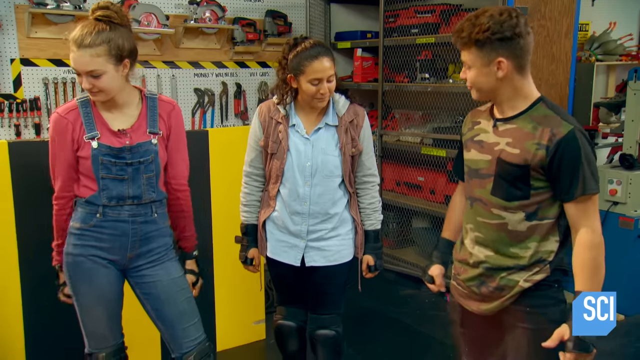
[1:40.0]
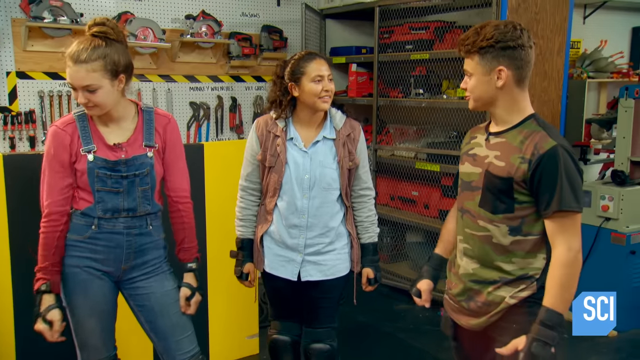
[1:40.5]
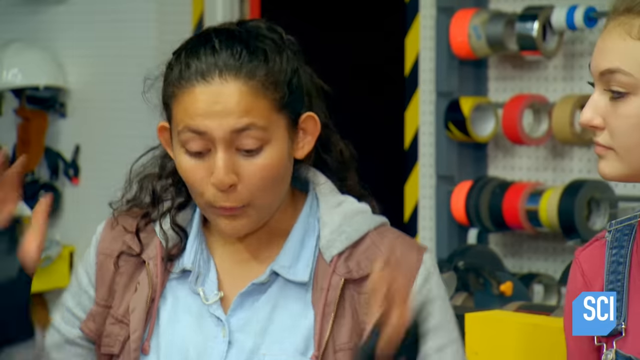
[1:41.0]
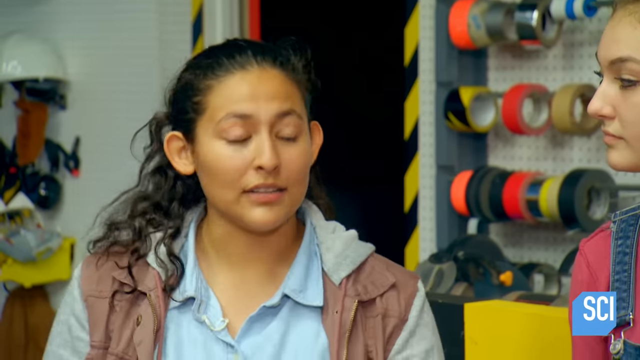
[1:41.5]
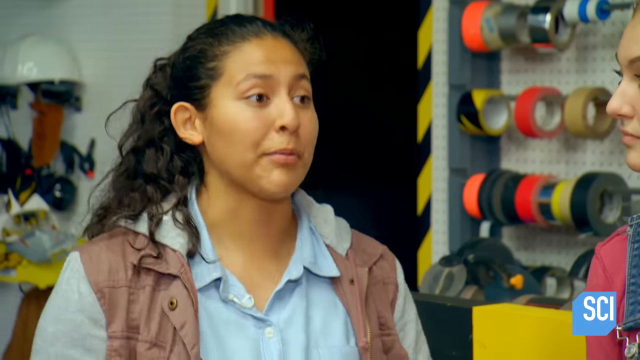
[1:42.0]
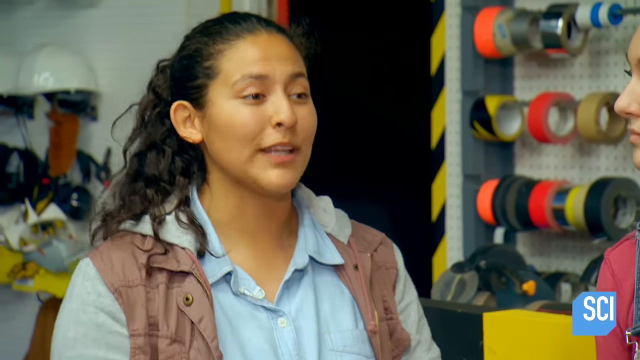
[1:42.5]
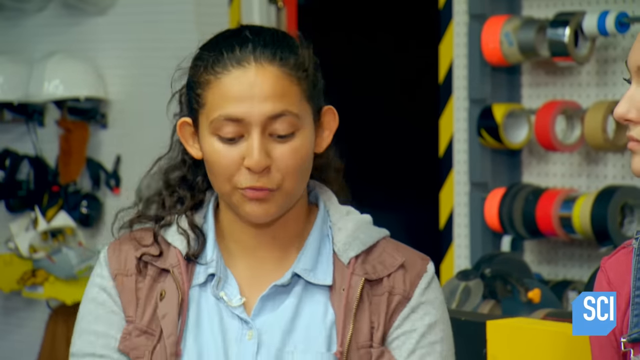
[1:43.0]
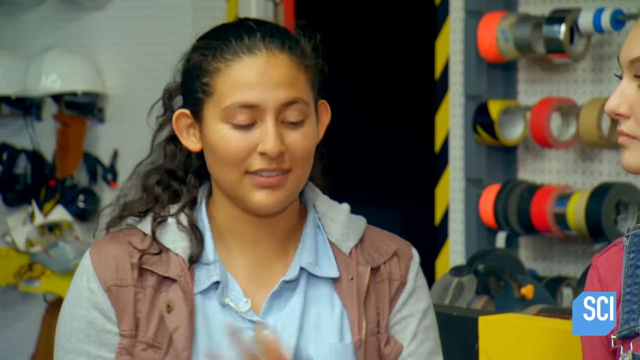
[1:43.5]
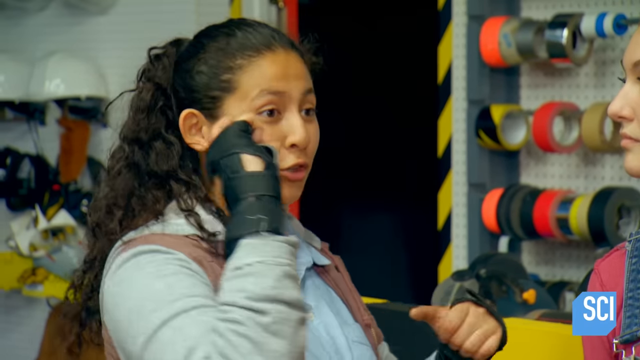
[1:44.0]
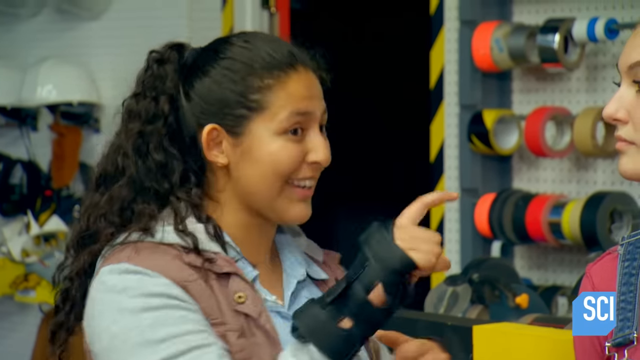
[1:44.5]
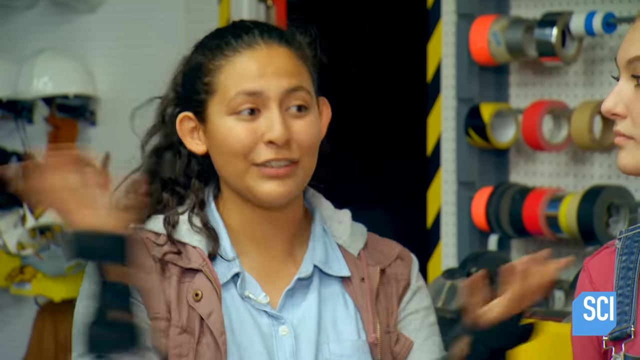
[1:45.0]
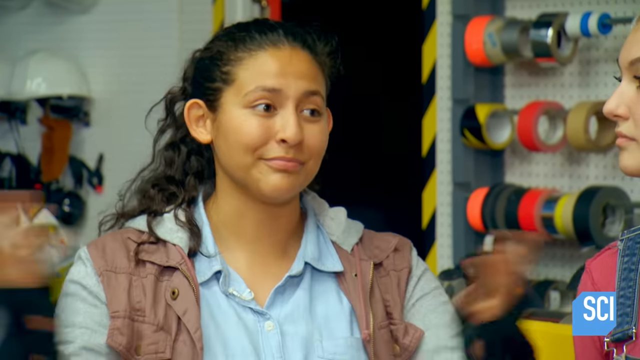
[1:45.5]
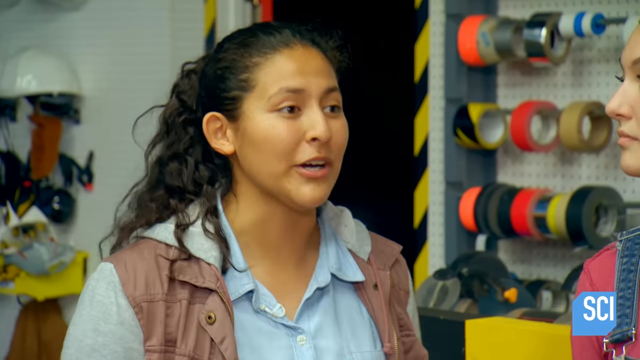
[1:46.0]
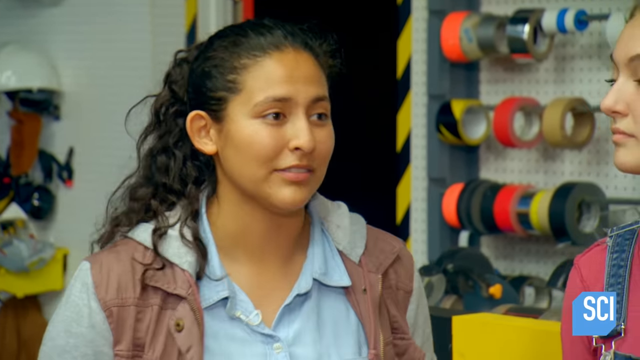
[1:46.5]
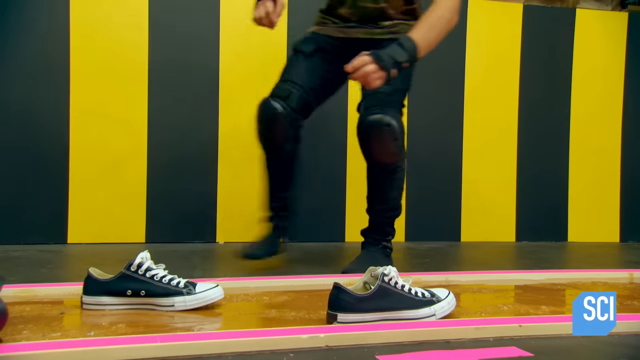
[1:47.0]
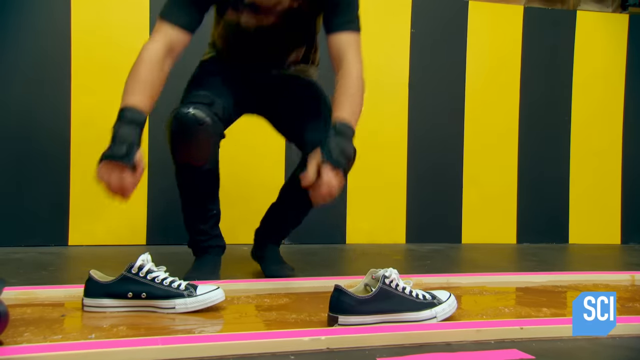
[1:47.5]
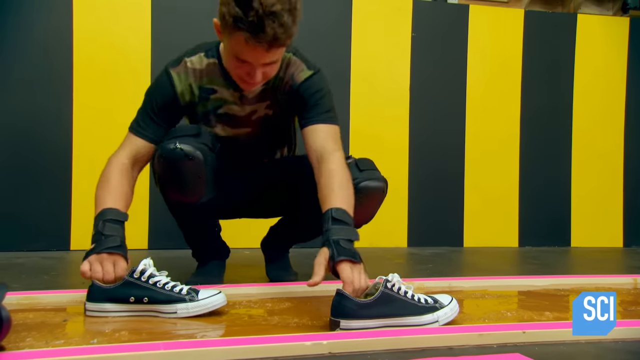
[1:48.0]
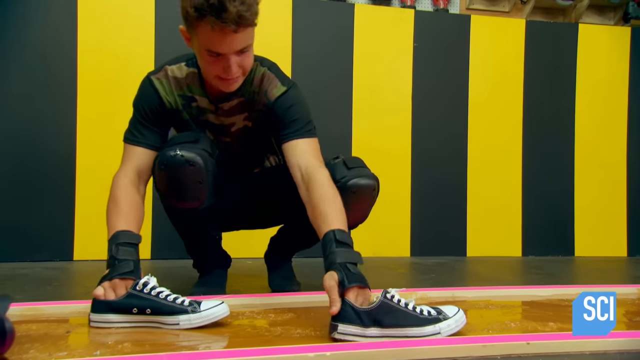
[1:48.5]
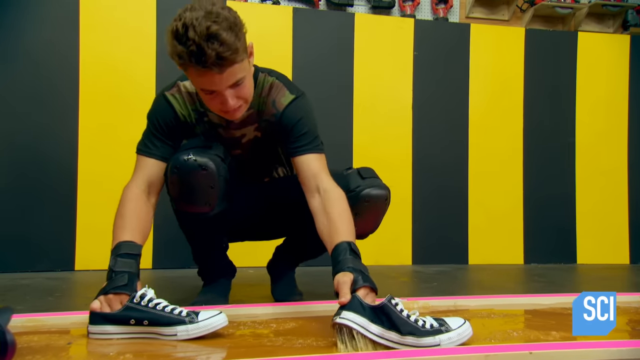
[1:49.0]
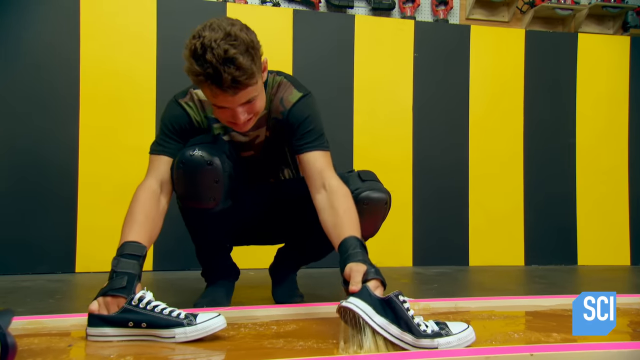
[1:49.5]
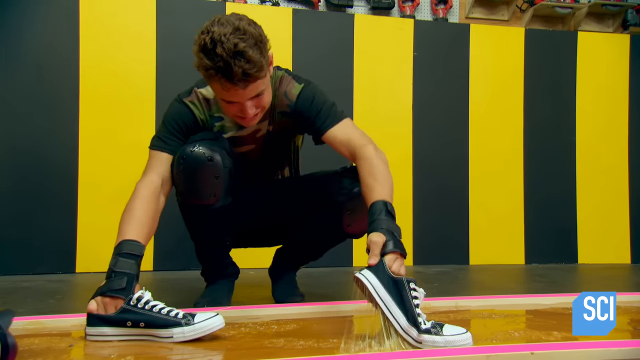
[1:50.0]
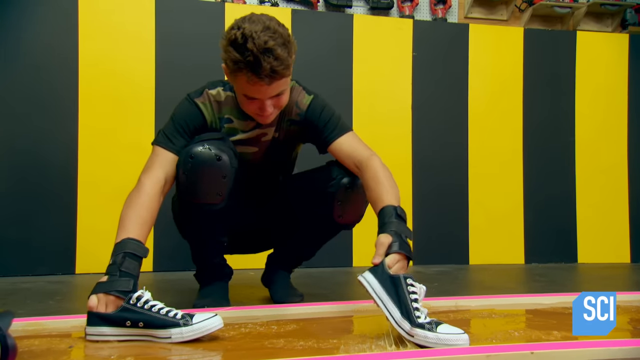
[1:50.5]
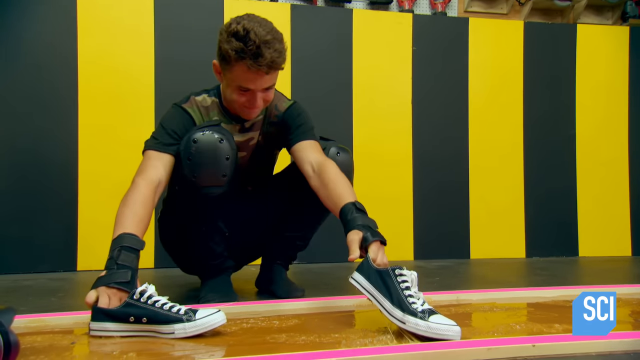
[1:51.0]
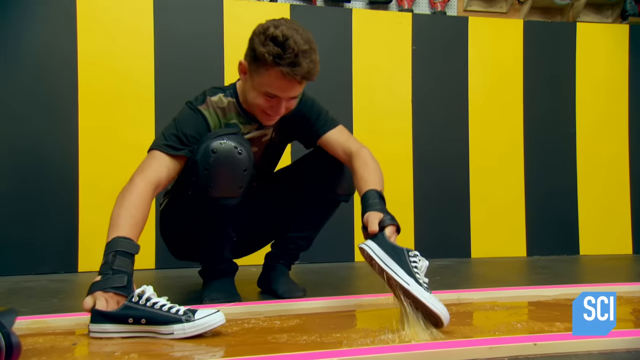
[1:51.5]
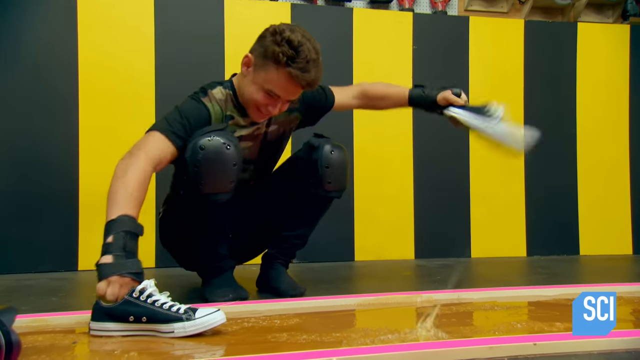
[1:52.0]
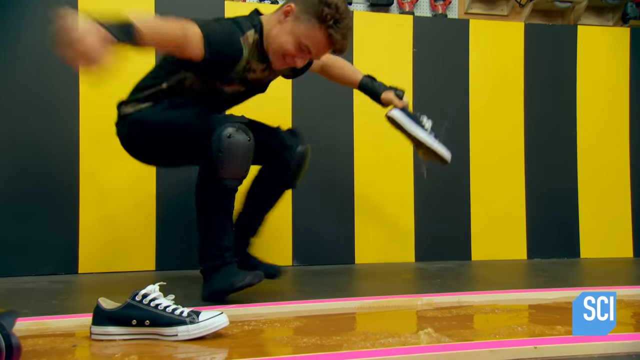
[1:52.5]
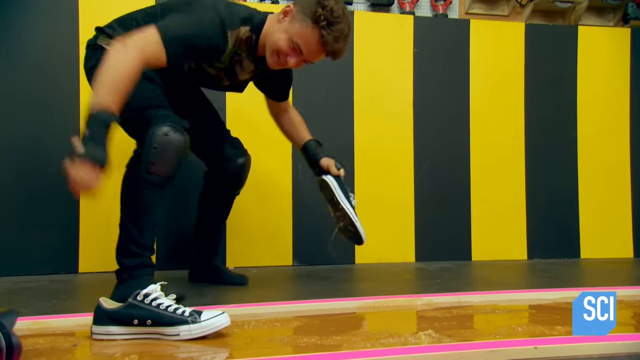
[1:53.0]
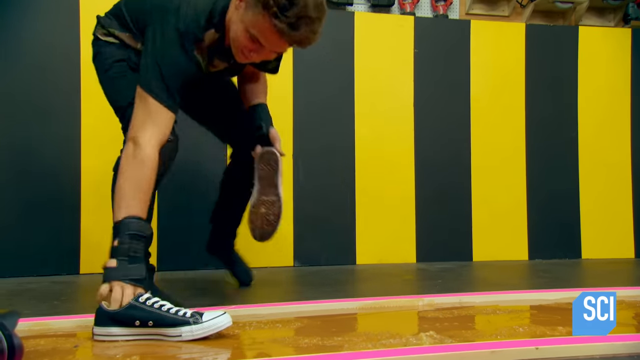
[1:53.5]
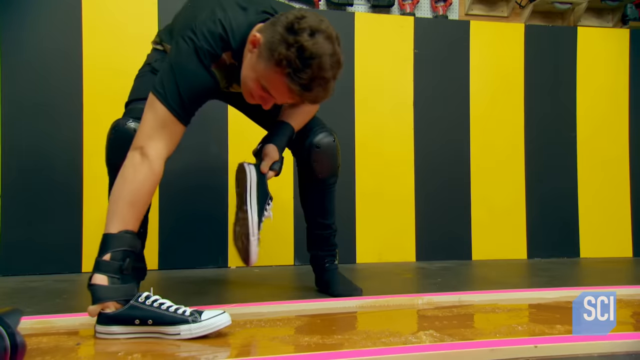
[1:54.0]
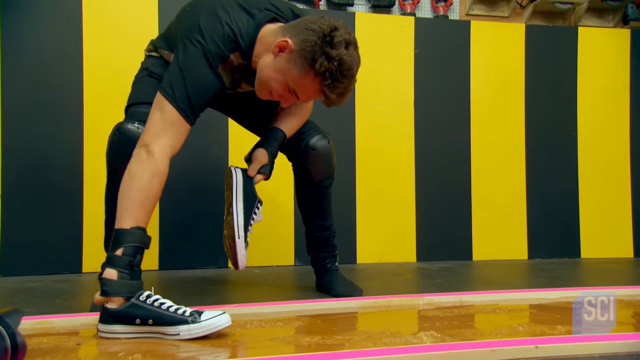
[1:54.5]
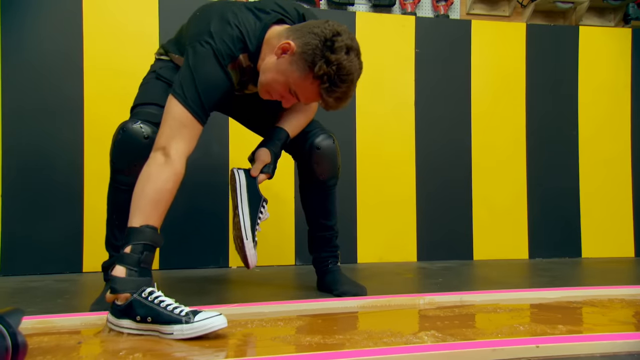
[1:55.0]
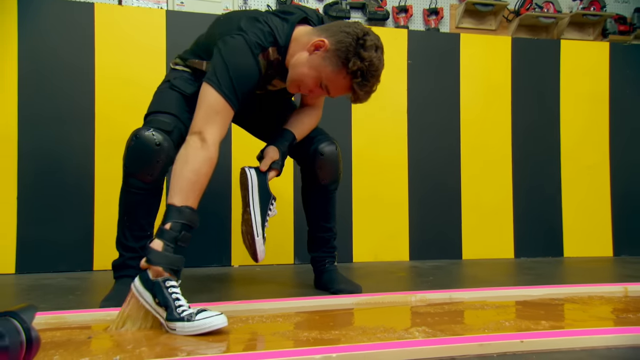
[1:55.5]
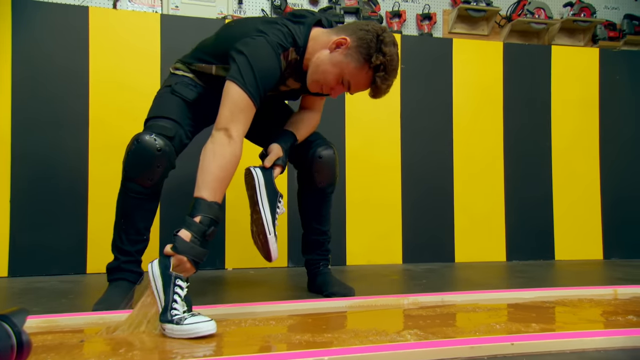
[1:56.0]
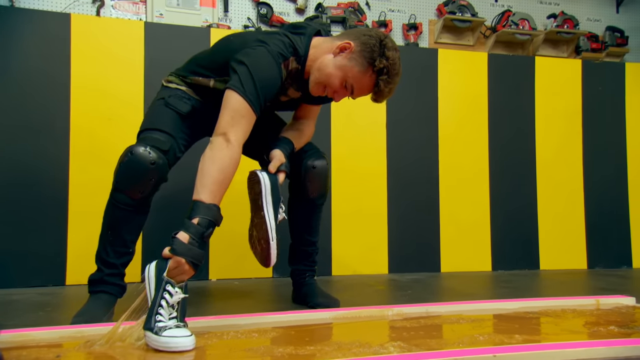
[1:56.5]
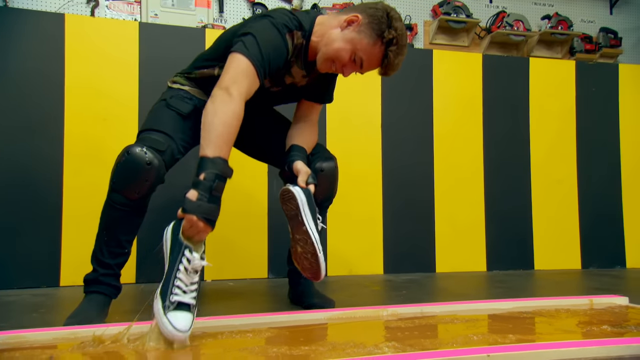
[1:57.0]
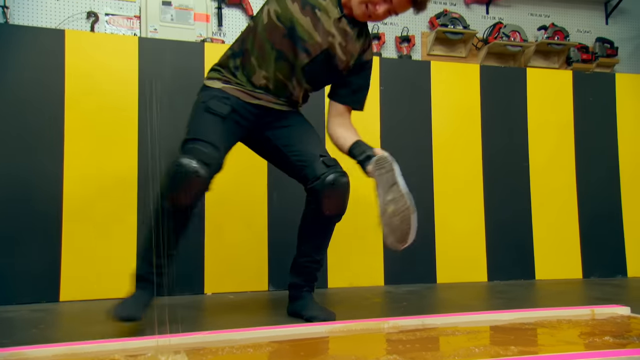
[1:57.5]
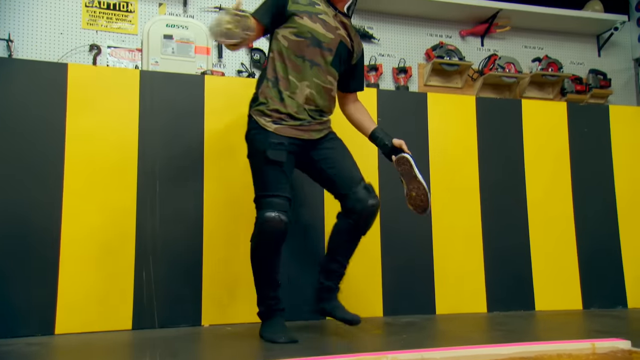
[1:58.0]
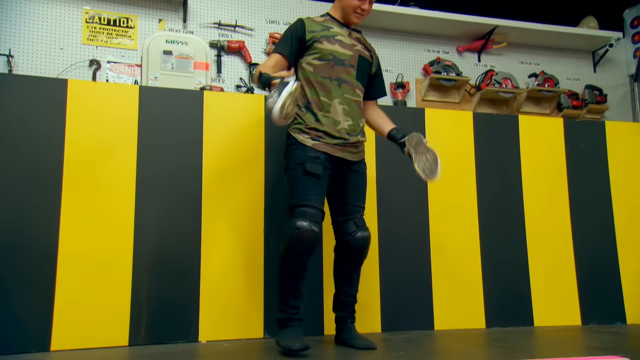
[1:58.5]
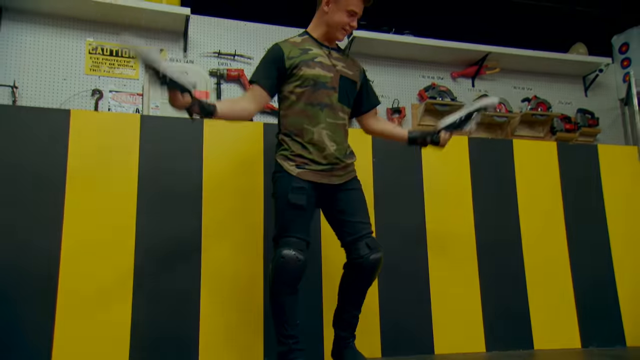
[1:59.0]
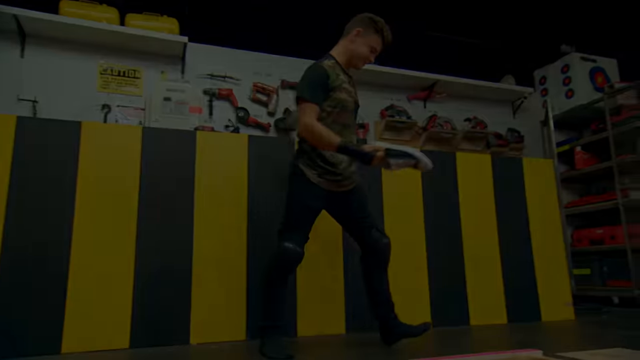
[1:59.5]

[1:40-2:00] The three teenagers, two girls and a boy, are together. The boy is sitting on the ground after falling off the glue; he then stands with the two girls. The girl in the center is the one with the cargo vest and blue polo shirt, and the girl to her left is the one in the overalls with the fuchsia top. They both talk to him about his run across the glue, all gesturing with their hands in conversation, and he laughs with the girls. After a cut, they all have on protective equipment for running across the glue. The camera shifts, and the girl in the cargo vest moves to the left side of the conversation. The camera turns to show, from ground level, the glue panel with the boy's two black Converse sneakers stuck to it. He steps into frame in just his socks, with the protective knee pads and wrist pads still on, pulls his left shoe out of the glue with difficulty, then his right shoe with difficulty, and returns to standing. He then walks out of the frame, and the video ends.